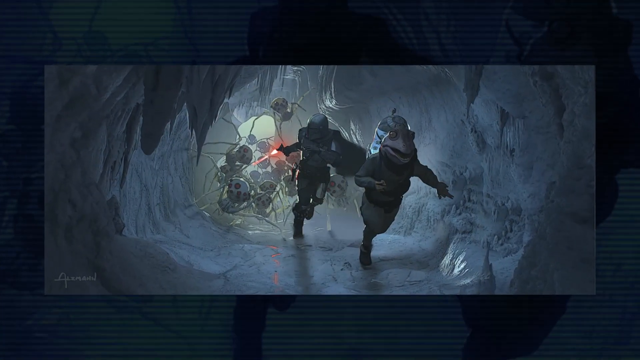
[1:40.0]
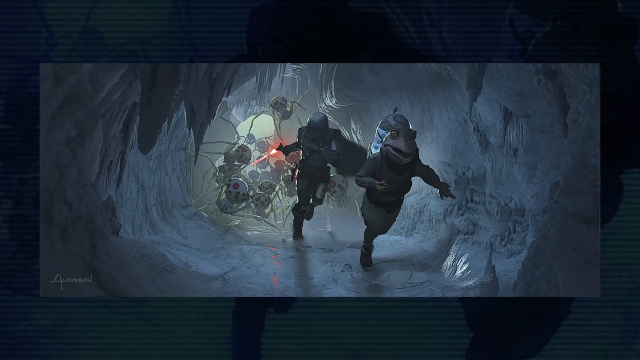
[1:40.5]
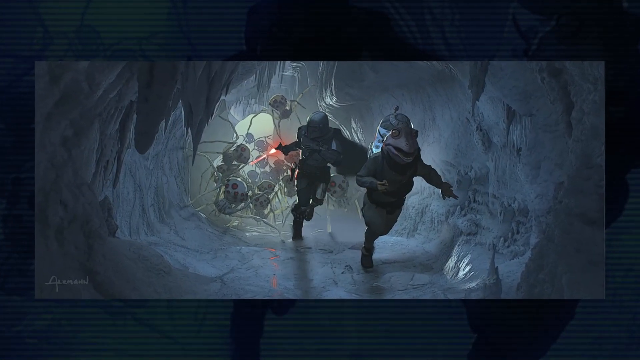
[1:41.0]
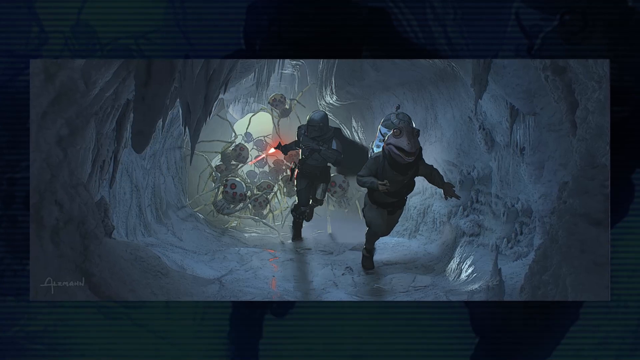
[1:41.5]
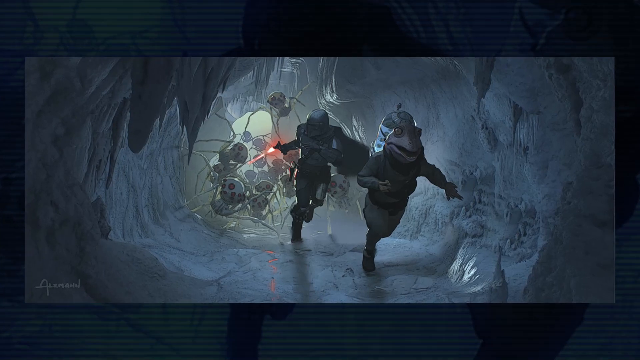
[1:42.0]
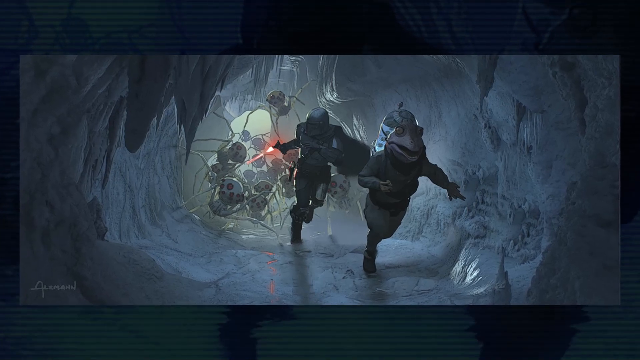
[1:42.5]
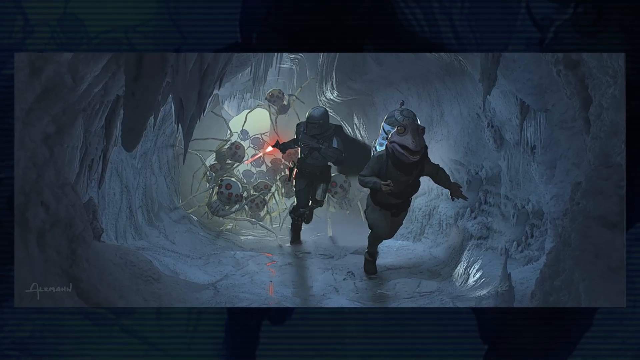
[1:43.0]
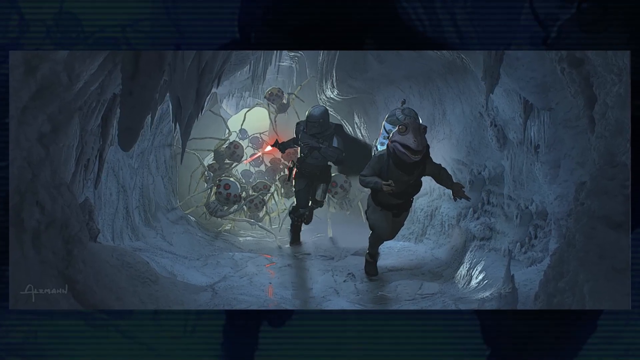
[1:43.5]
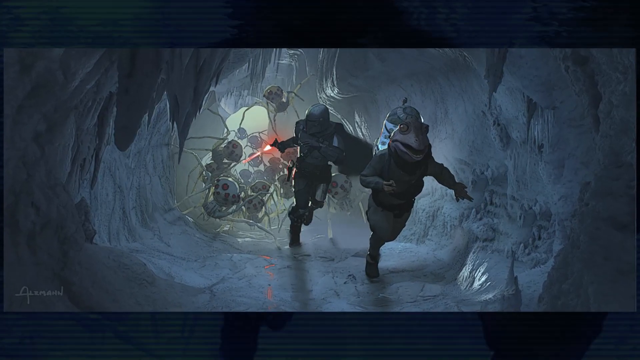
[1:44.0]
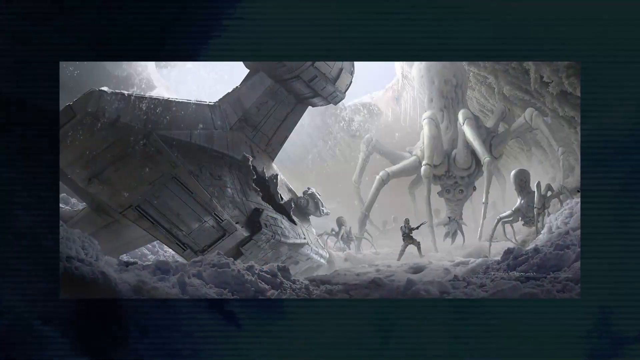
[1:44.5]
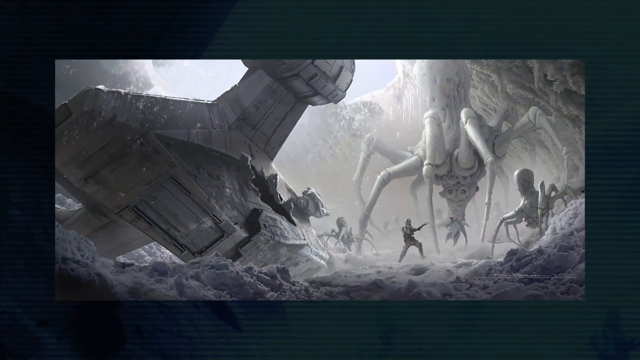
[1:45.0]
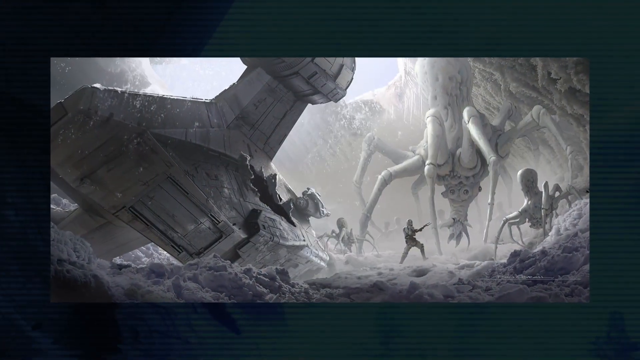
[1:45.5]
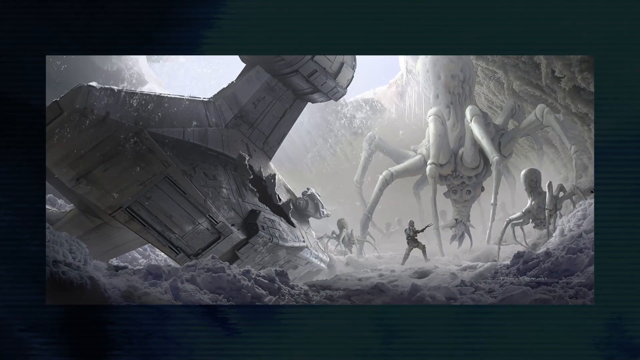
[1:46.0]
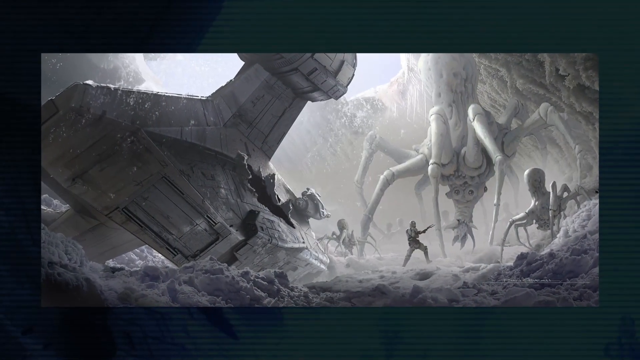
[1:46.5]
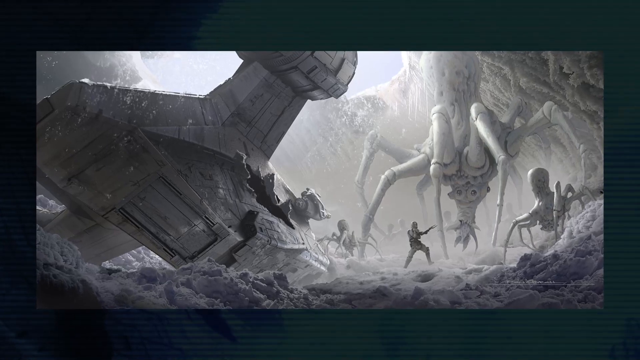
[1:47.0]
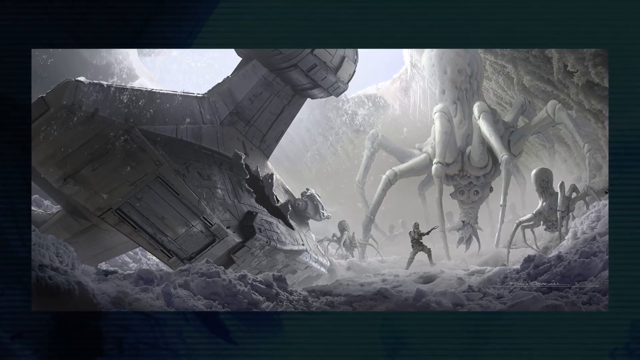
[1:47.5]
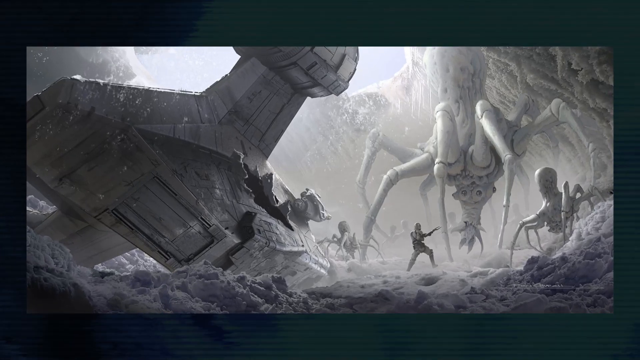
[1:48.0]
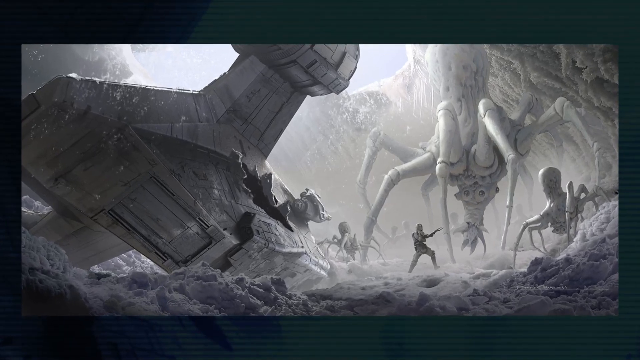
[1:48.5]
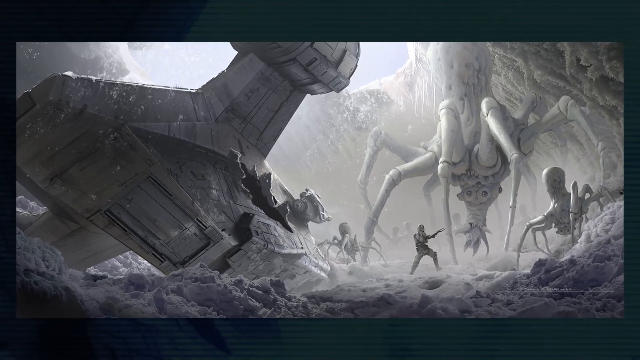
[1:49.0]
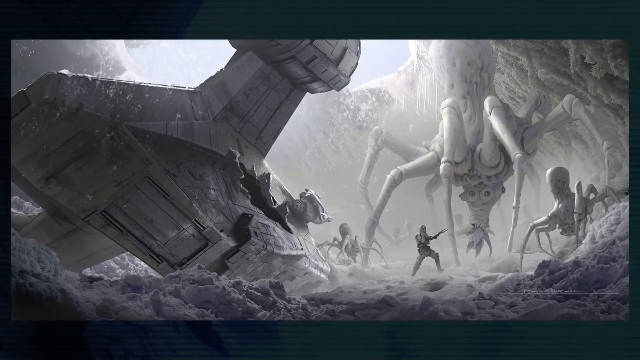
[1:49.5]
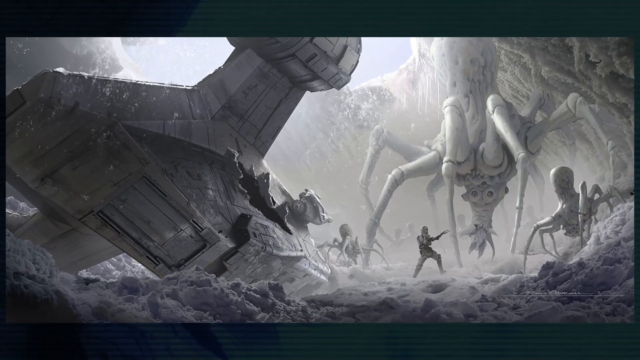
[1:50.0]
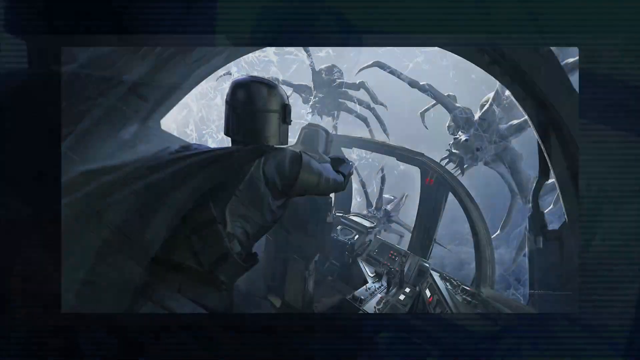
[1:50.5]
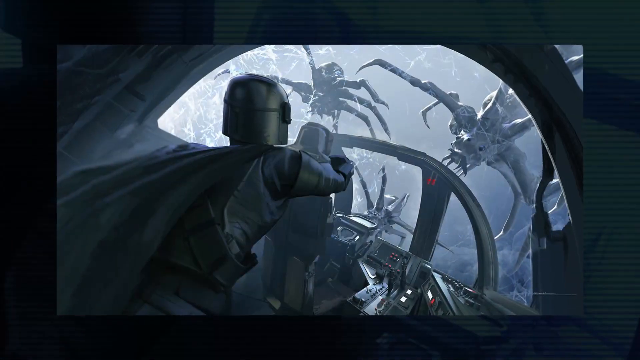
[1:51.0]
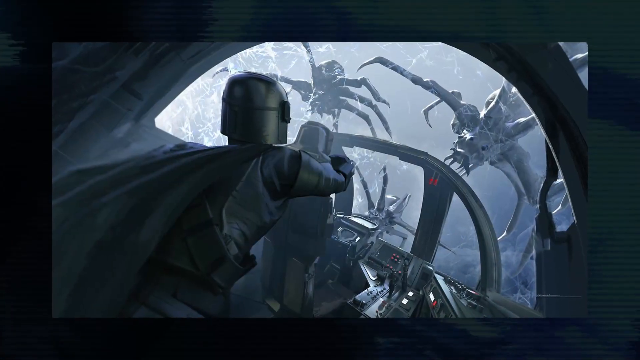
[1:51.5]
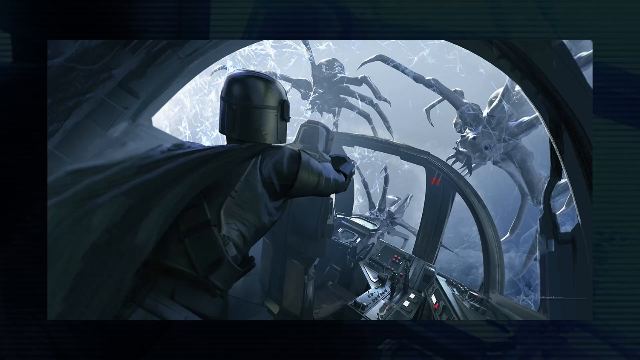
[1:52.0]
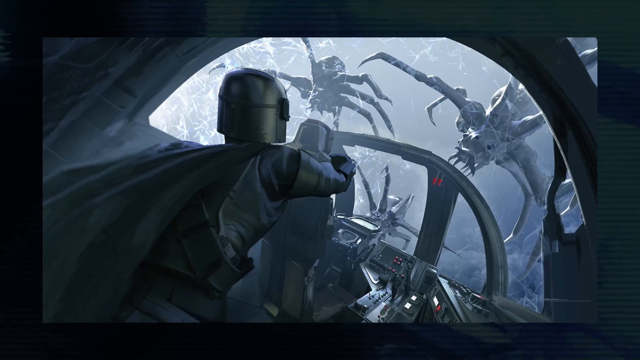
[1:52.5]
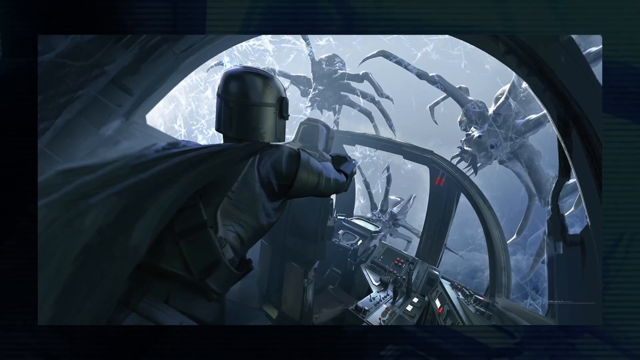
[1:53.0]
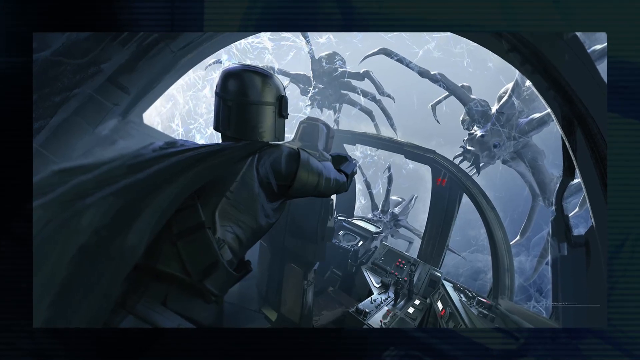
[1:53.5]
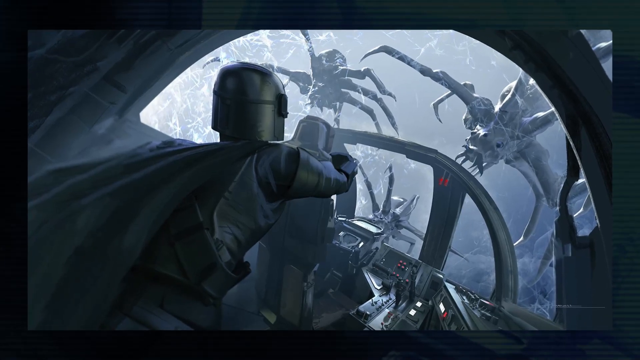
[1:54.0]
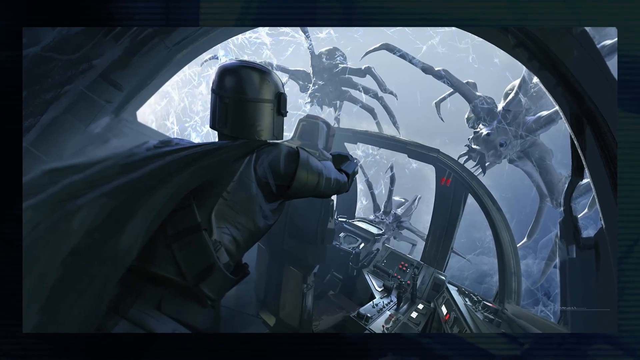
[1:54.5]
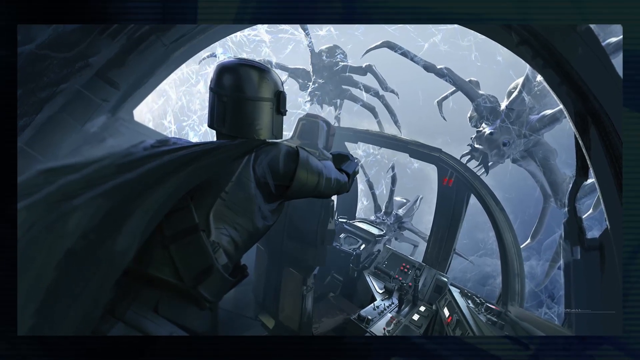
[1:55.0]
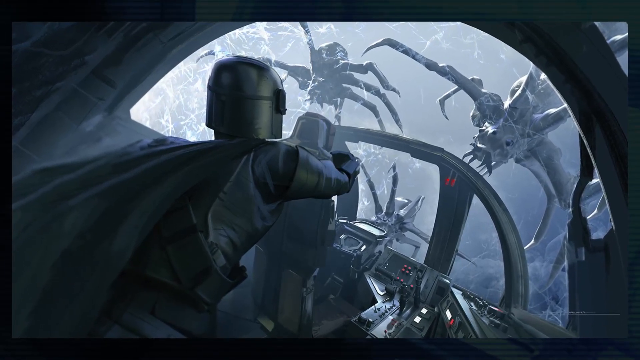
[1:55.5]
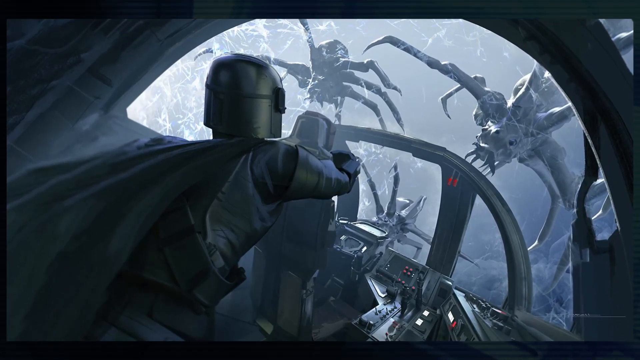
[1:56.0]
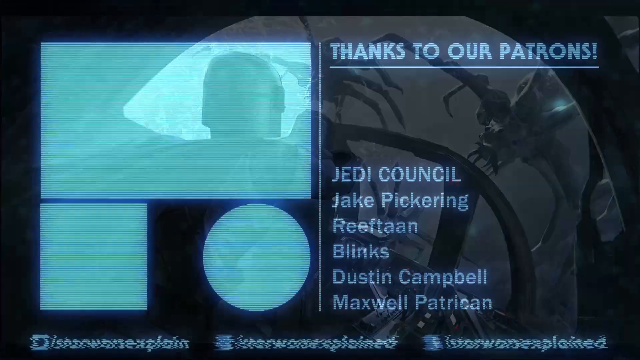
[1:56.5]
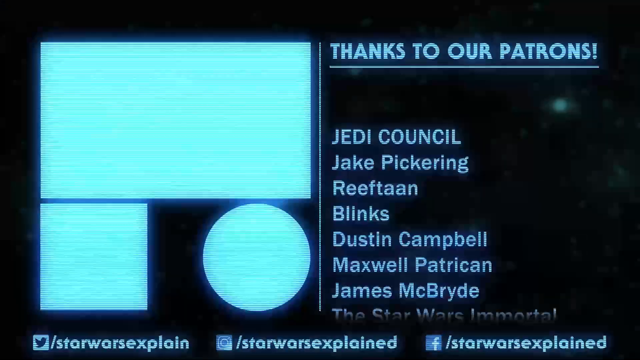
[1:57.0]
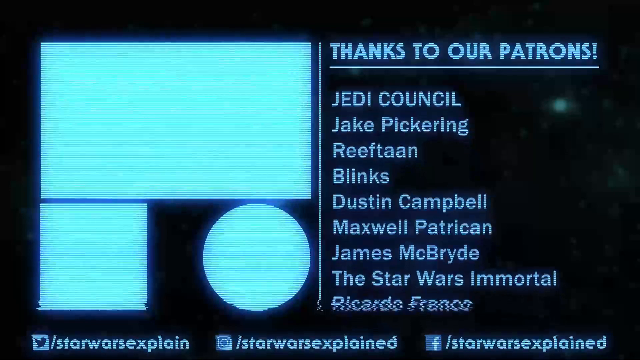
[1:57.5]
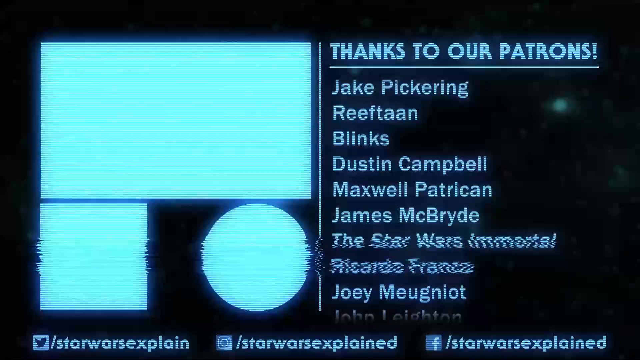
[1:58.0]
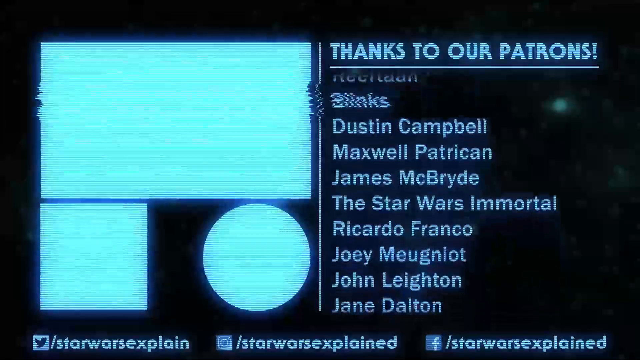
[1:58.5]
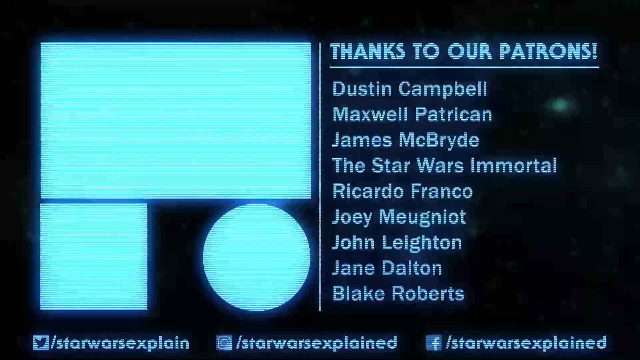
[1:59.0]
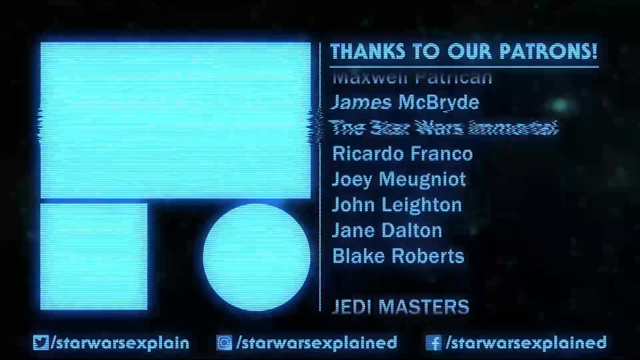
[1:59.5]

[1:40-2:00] A series of images that look like illustrations from a film shows a monster character that looks like a large white spider, and other characters fighting groups of these creatures, one of which is larger than the others around it. Several still illustrations show the creatures in a cave and in a rocky terrain as human characters fight them. In one scene, a human character is in what looks like the cockpit of a spaceship or a fighter jet, with three of the spider-like creatures in front of the window approaching him. As this image fades, a screen appears that says "Thanks to our patrons" on the right, while a series of names scrolls up from the bottom of the screen. Some are classified as members of the Jedi Council and others as Jedi Masters. On the left side of the screen are some blue geometric figures.